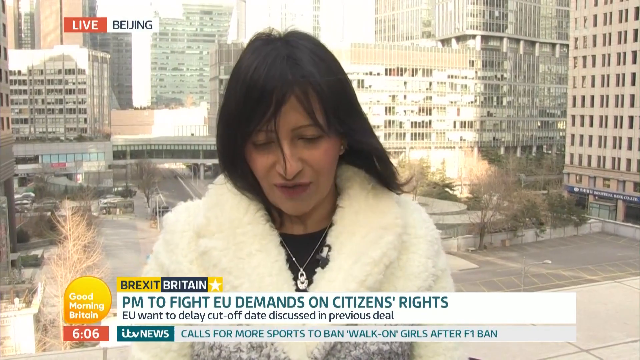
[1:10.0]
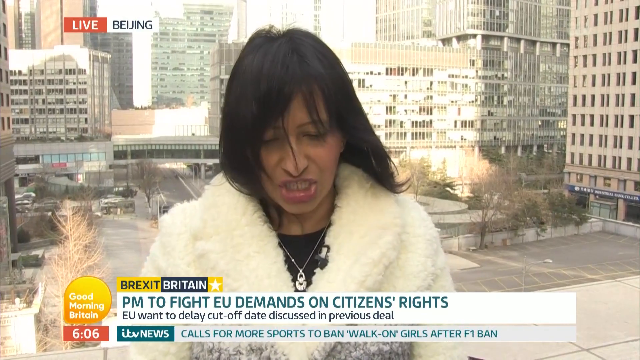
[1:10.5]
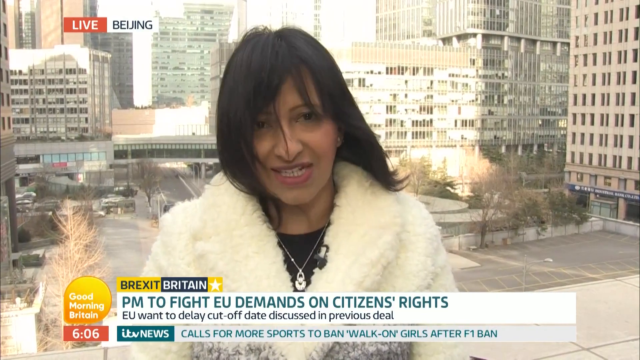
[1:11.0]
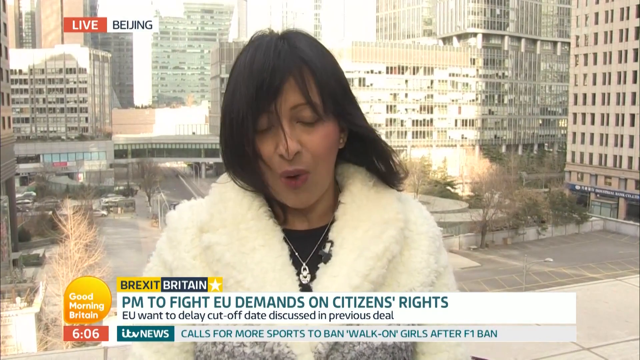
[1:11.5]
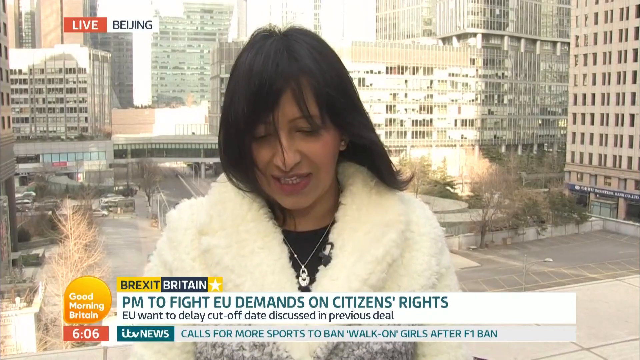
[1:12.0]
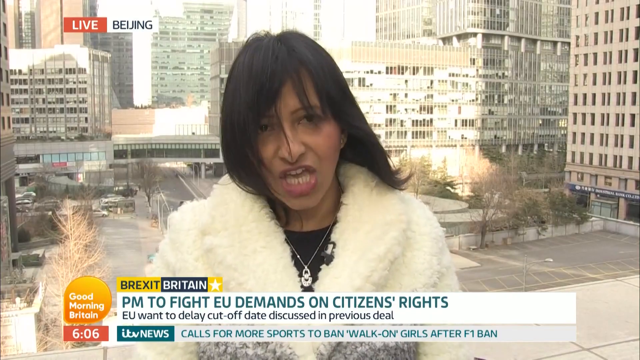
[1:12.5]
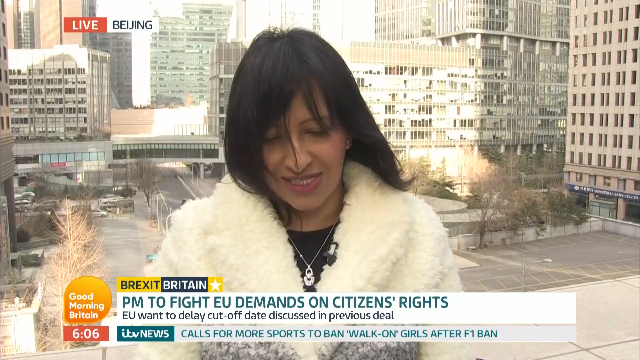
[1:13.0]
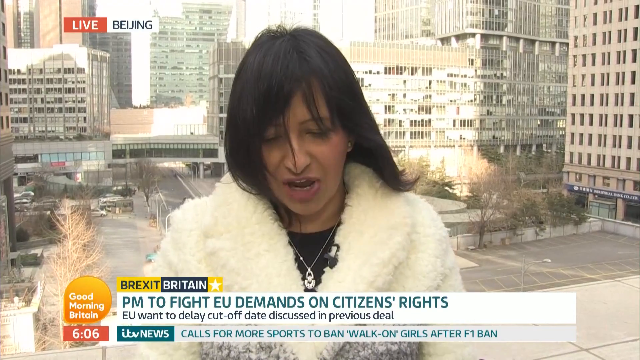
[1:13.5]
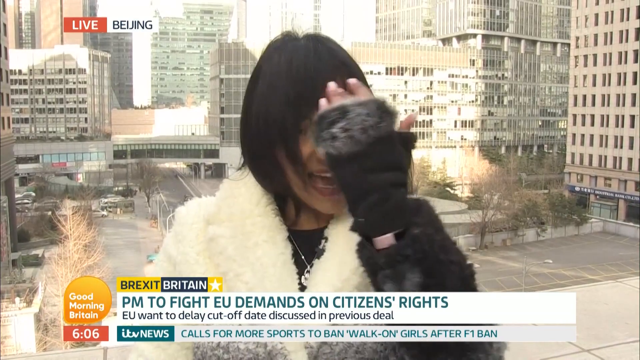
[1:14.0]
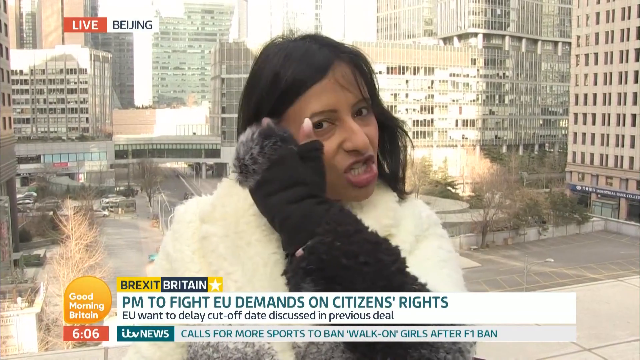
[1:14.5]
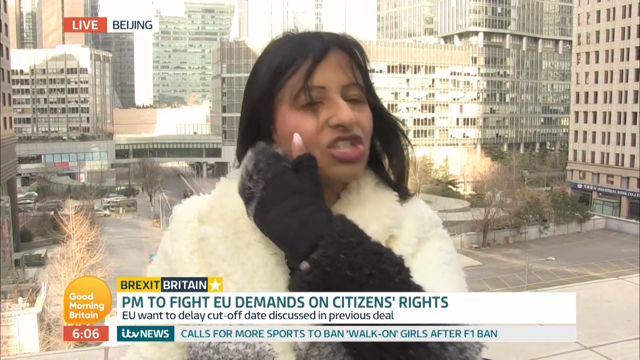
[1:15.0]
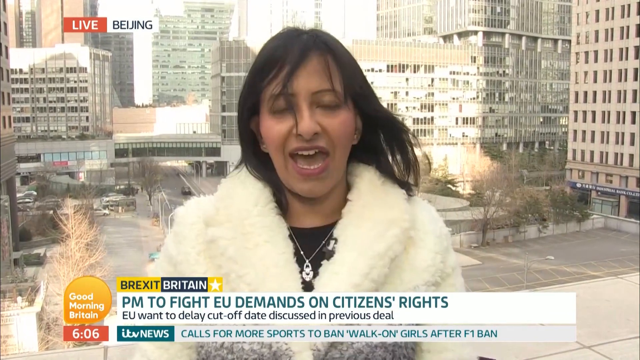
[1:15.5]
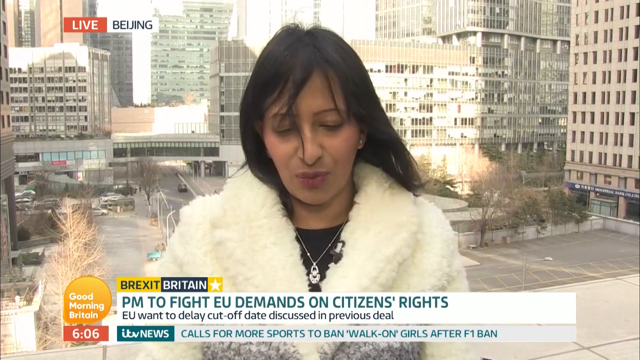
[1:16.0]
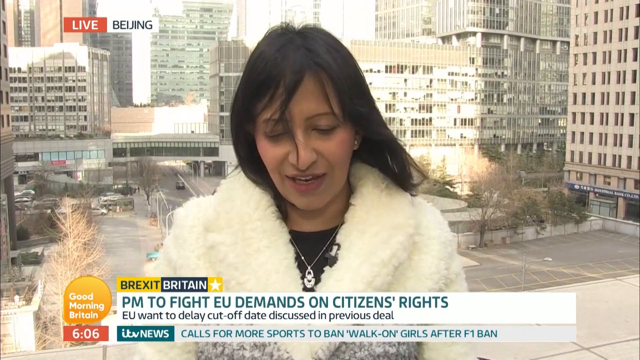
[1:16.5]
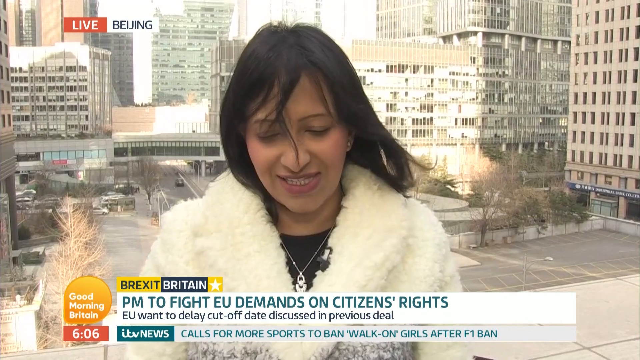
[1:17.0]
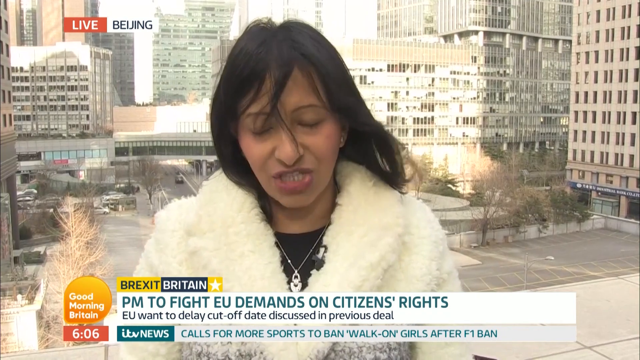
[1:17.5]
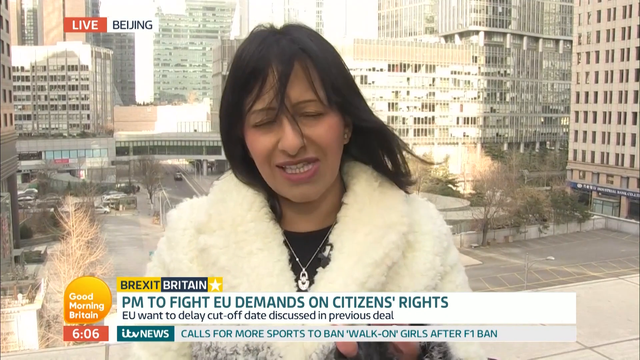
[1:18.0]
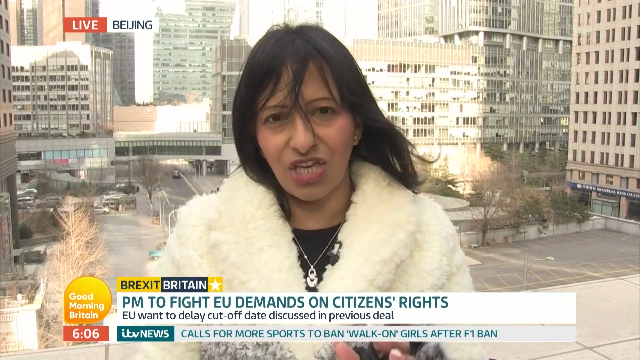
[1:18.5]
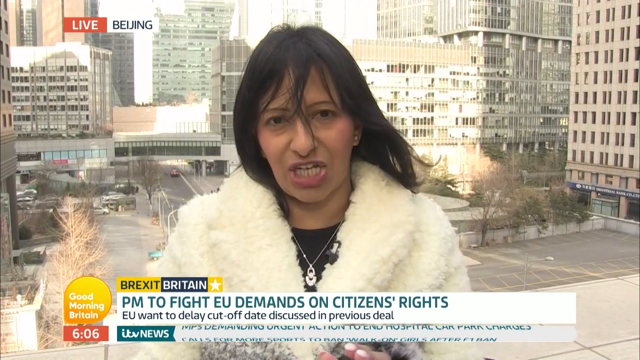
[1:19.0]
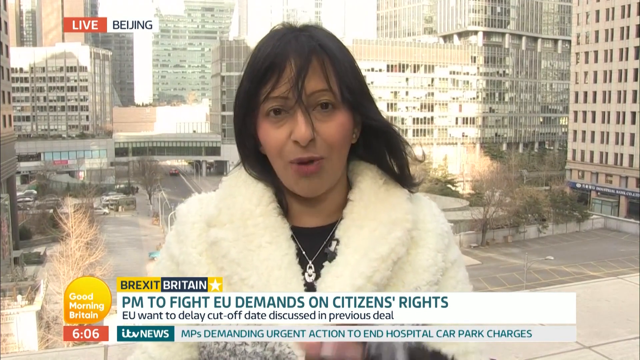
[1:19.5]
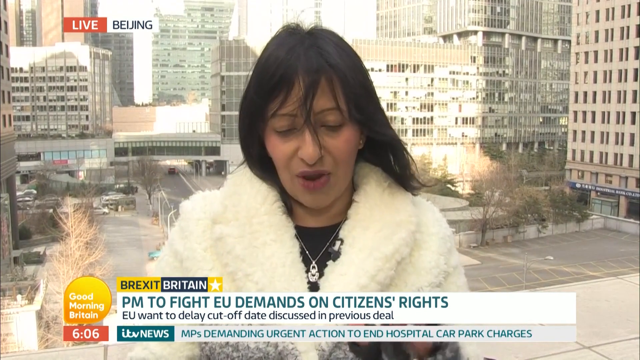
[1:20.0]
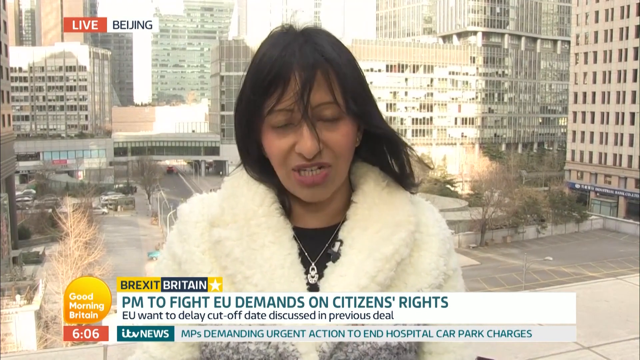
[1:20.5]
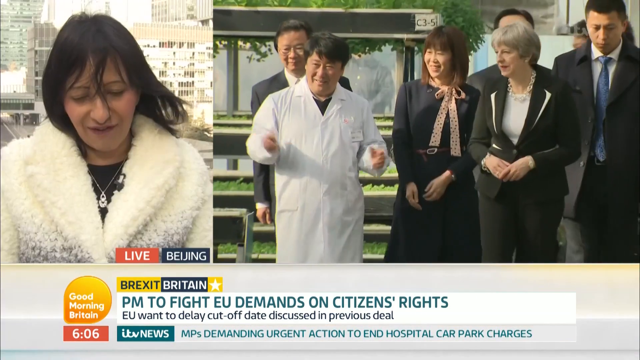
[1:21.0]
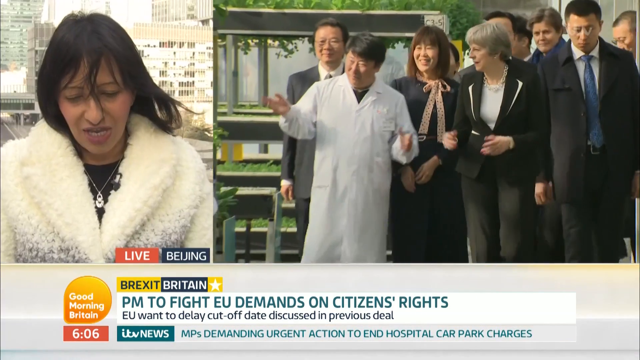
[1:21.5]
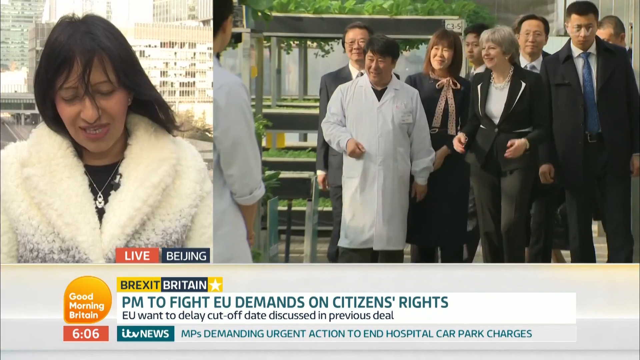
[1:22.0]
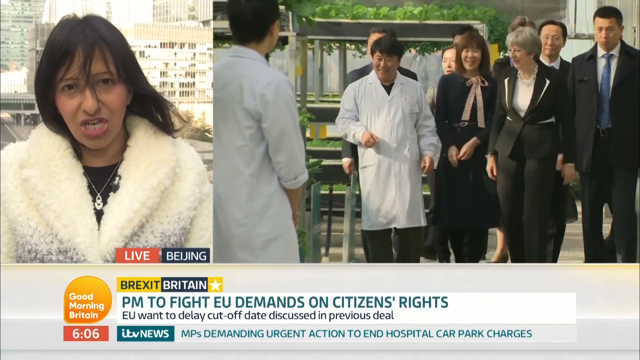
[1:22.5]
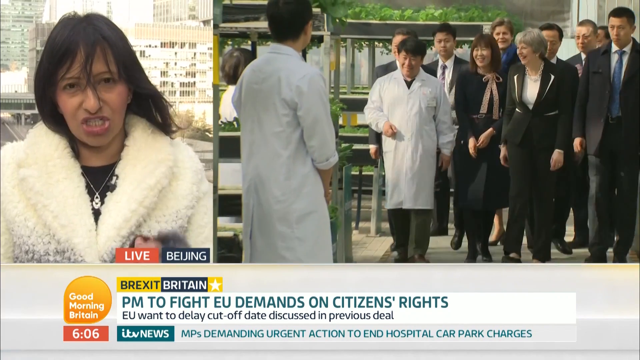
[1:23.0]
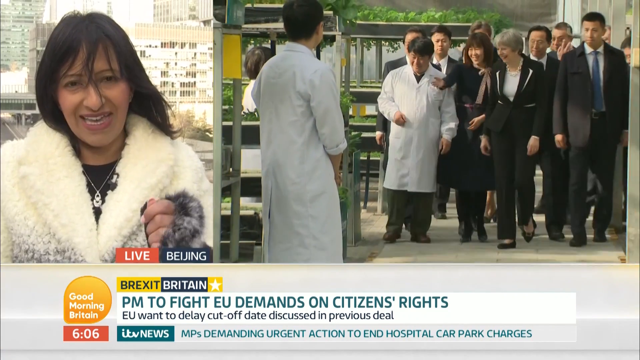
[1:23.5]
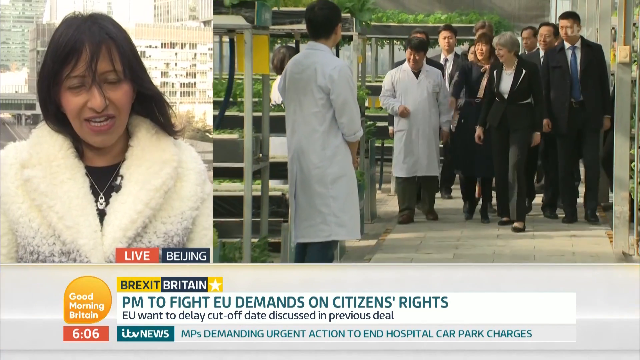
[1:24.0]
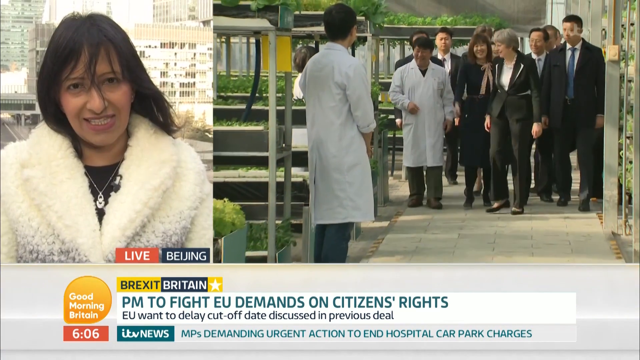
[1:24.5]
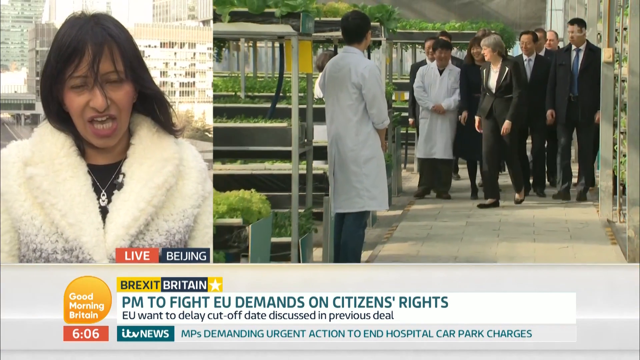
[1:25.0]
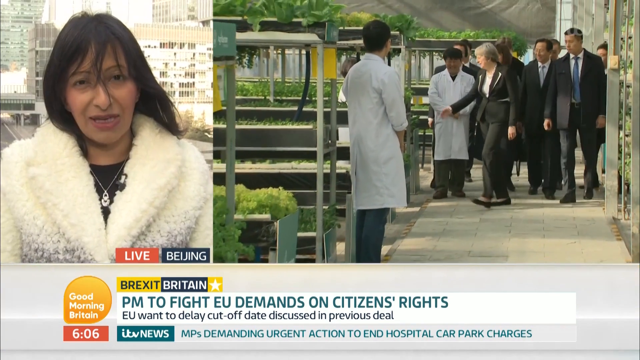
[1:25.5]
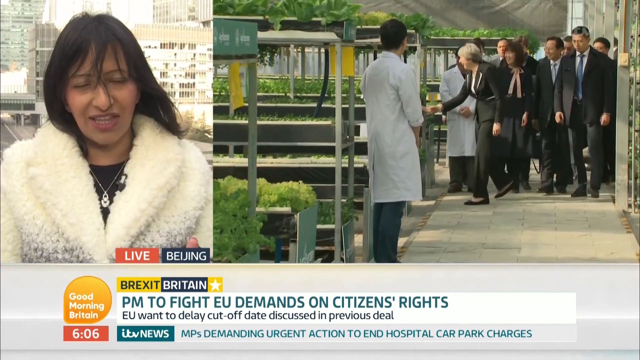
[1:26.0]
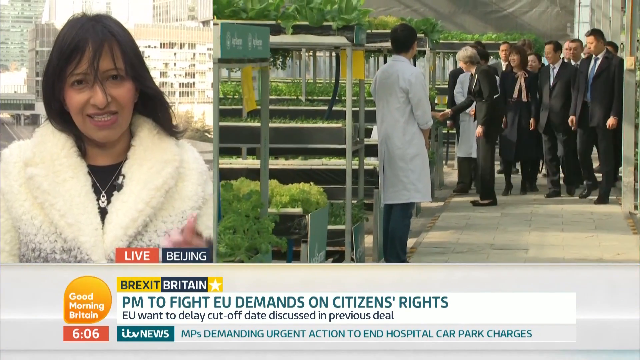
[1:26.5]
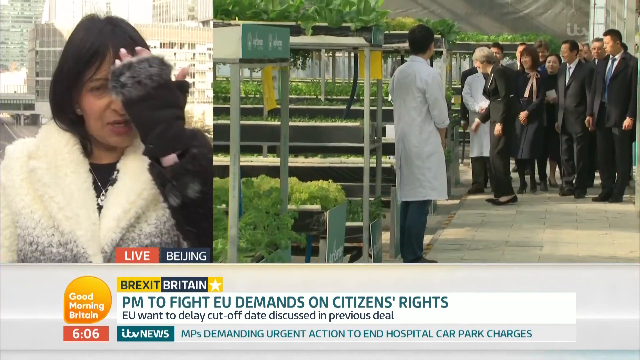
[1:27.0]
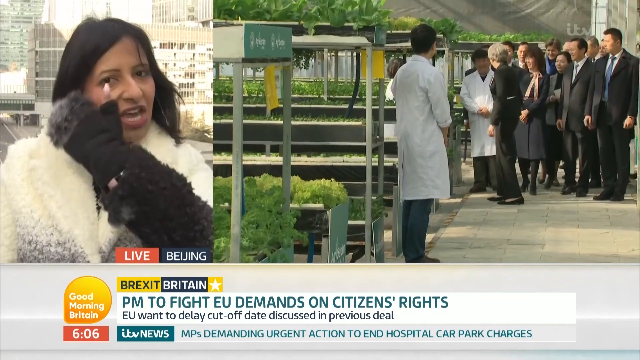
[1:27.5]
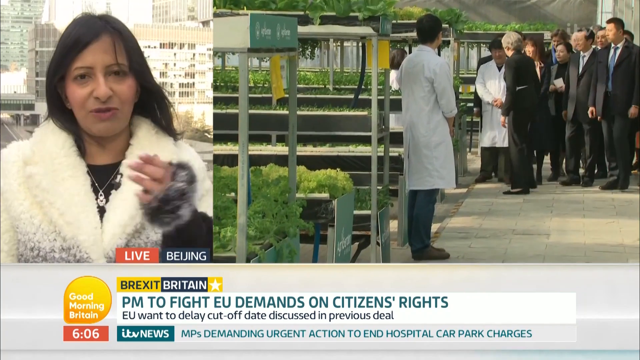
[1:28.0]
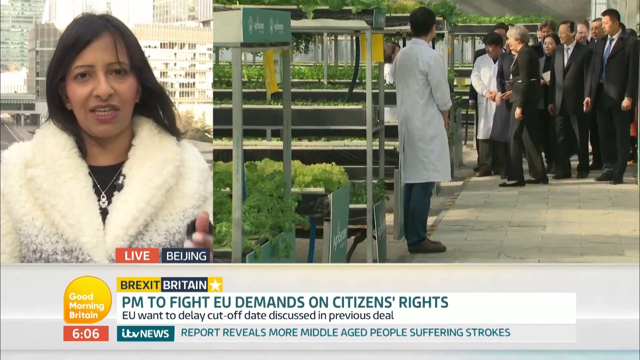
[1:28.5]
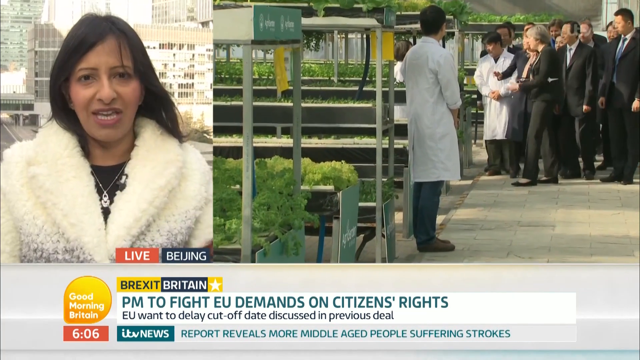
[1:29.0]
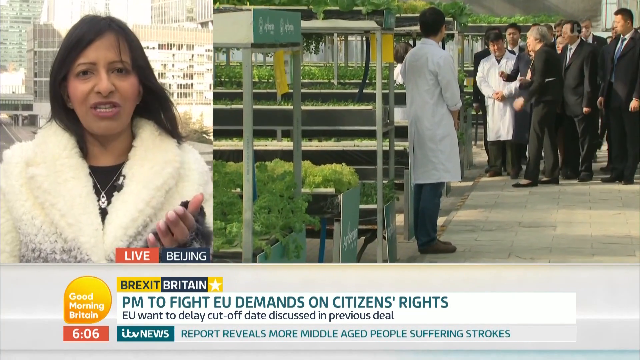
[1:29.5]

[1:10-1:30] The woman, who looks Pakistani, reports live from Beijing; it looks like morning, around six o'clock. She seems to be reading from a paper that is not visible. It looks a bit windy, as her hair moves in the wind. Another scene then appears, apparently showing politicians visiting a science hub or lab for plants built outdoors. The minister looks like a woman; as she walks, she greets a few scientists. She came with a group of members, all of whom are Chinese.